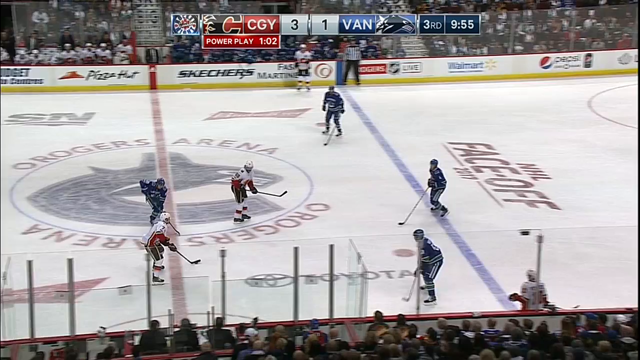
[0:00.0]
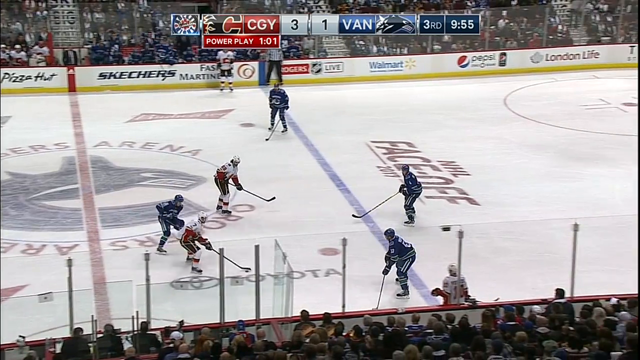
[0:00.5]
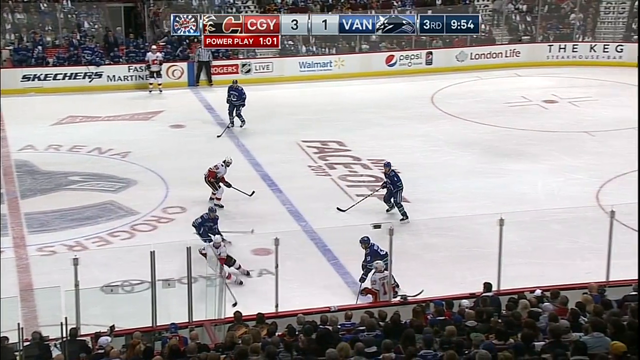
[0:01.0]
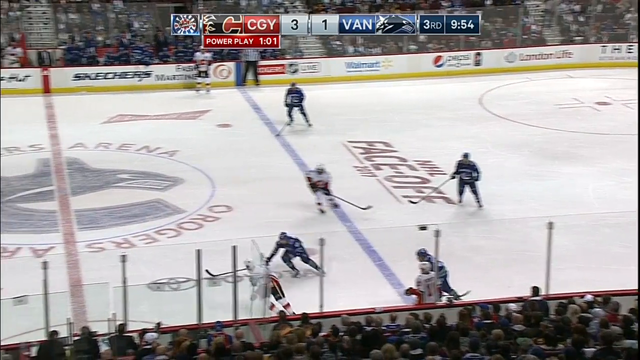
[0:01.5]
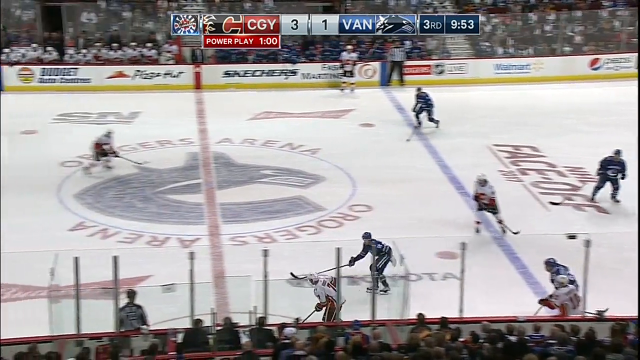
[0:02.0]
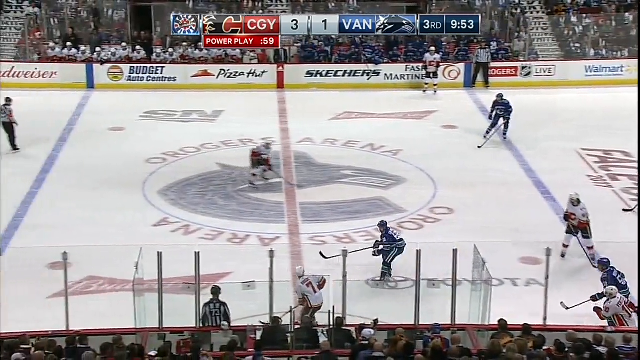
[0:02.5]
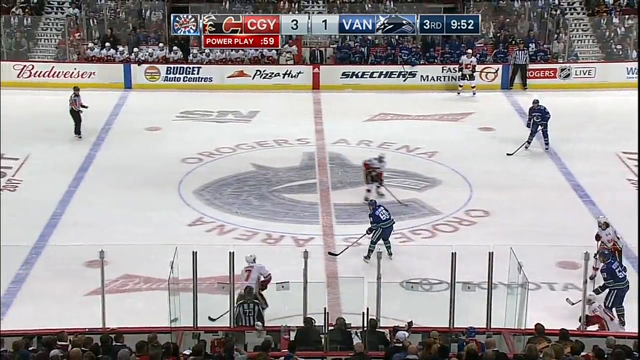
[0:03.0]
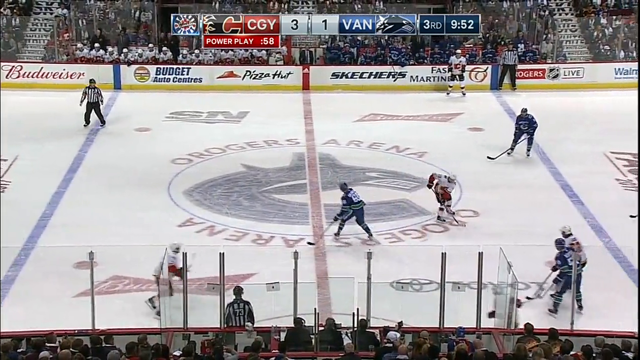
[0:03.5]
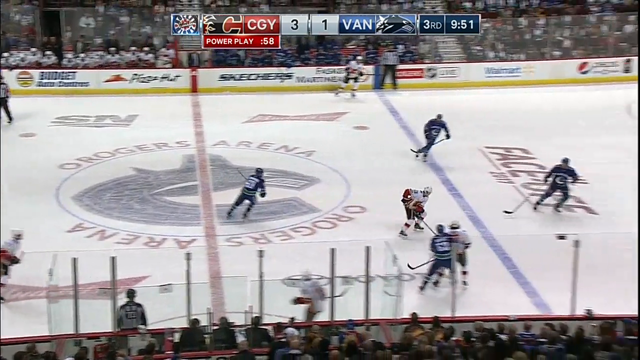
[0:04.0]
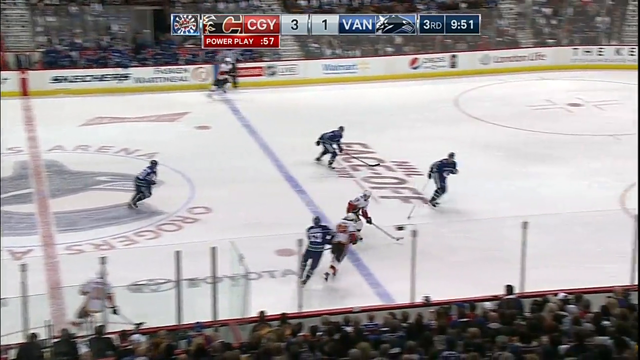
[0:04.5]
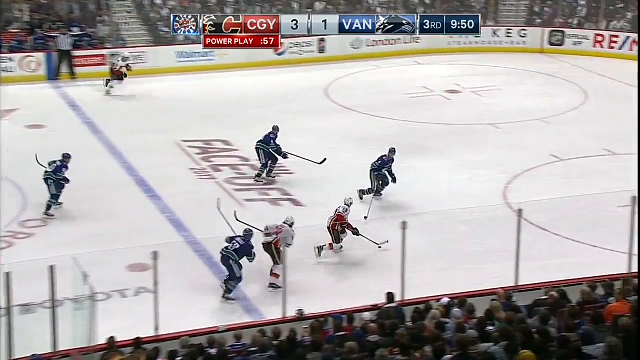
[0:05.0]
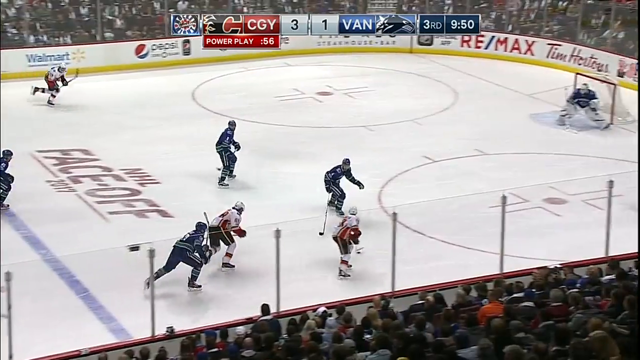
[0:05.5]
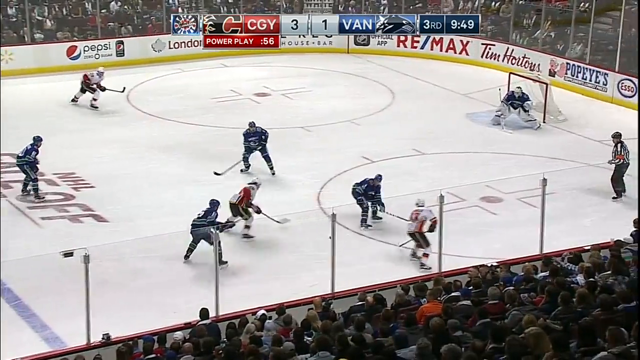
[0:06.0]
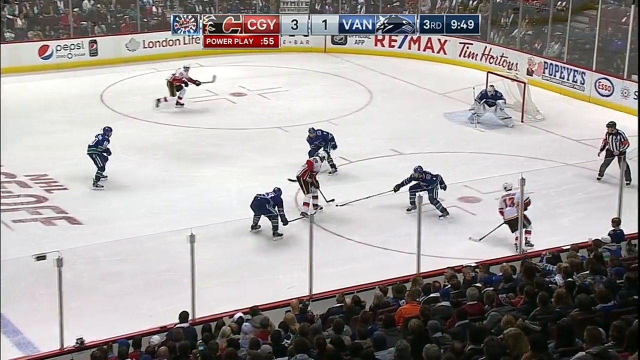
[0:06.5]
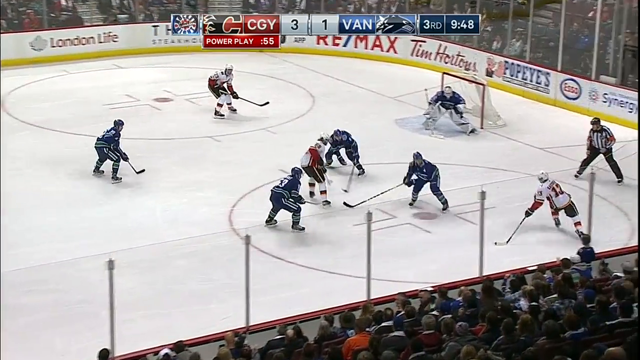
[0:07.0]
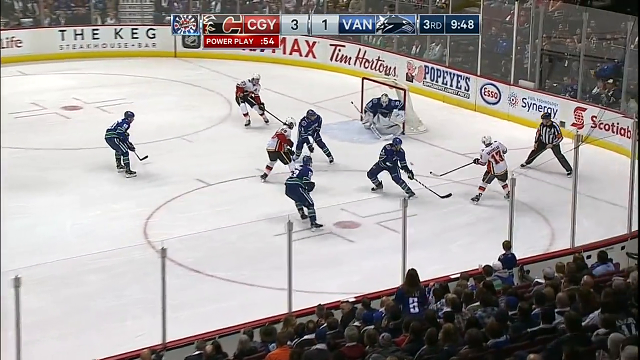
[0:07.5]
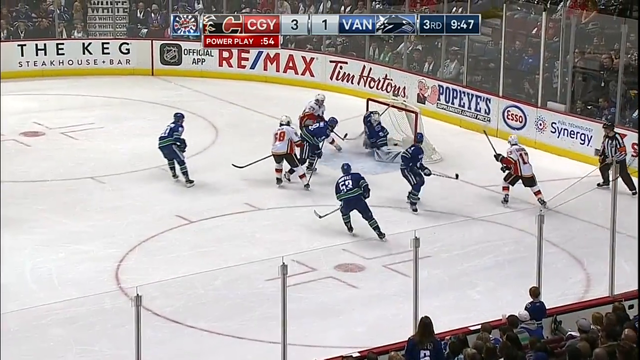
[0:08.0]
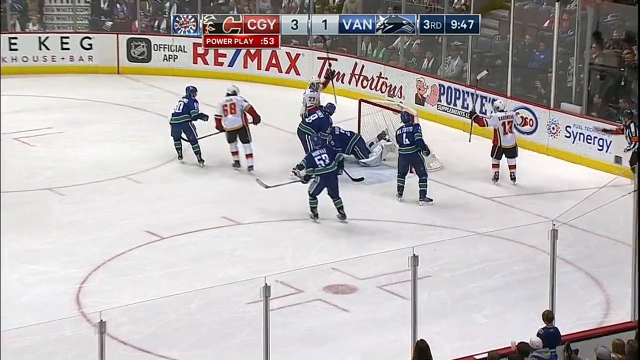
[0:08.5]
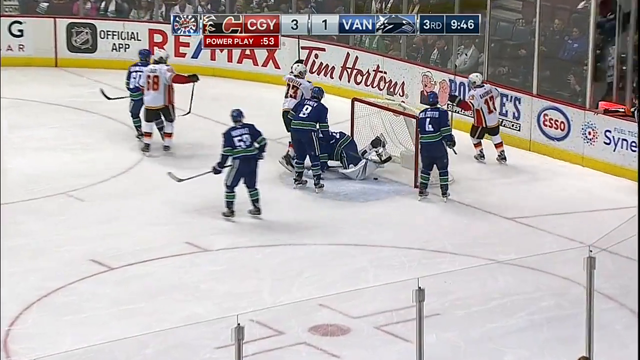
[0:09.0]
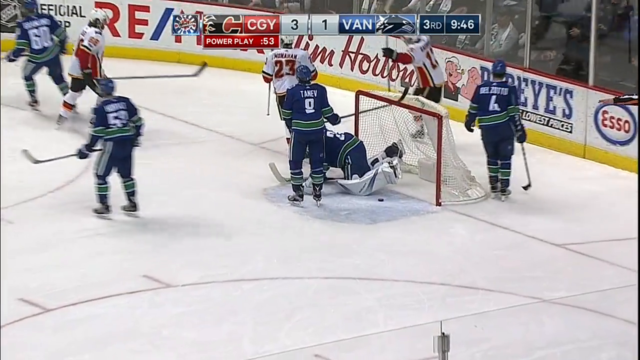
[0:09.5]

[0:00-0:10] A hockey game between Calgary and Vancouver is being played in Vancouver, with the arena logo showing Rogers Arena. At first there are two players in white jerseys and four in blue jerseys, then three players in white, who are Calgary. The Calgary players wear white helmets and red pants. They pass the puck to each other, with one player coming in and passing to another, getting around the defense and finally taking a shot. Number 23 scores a goal against the home team in blue, the Vancouver Canucks, beating the goalie, who is on the ice after failing to stop it. The players' faces are not visible.